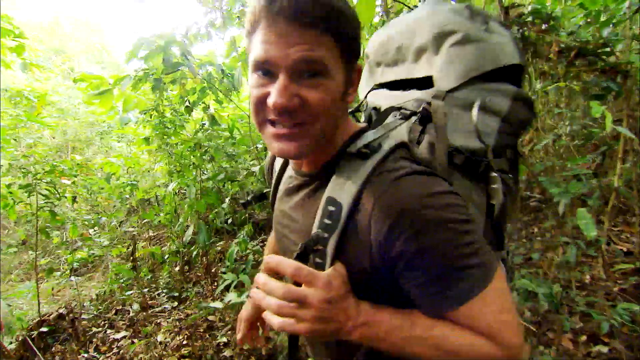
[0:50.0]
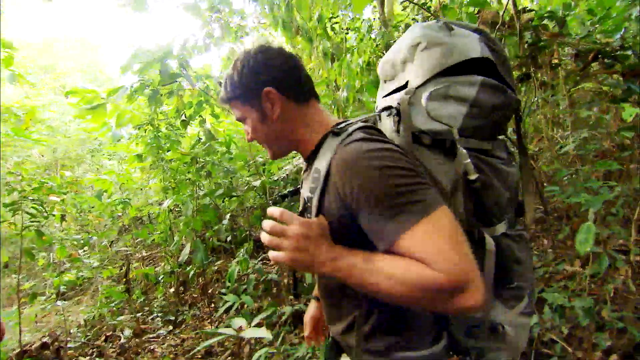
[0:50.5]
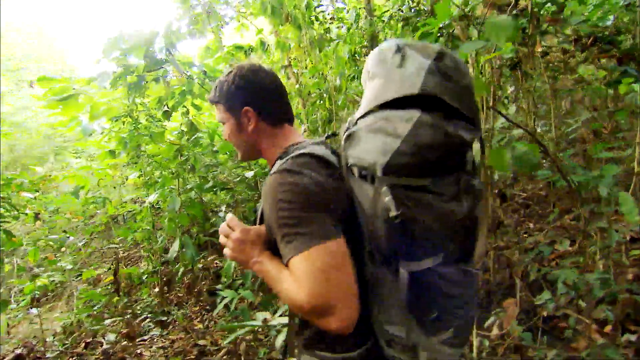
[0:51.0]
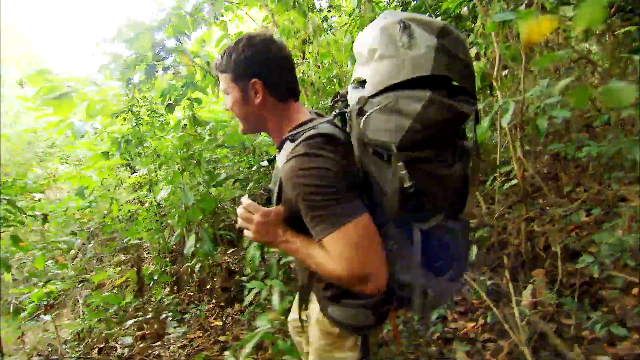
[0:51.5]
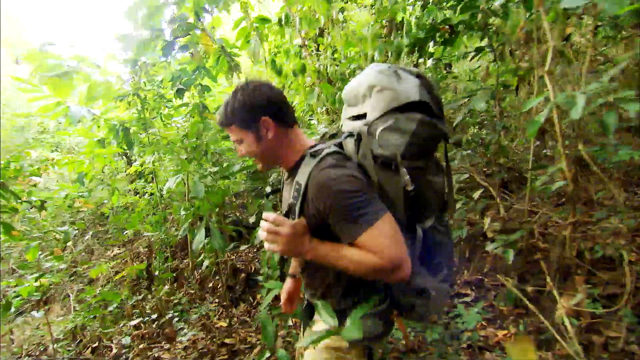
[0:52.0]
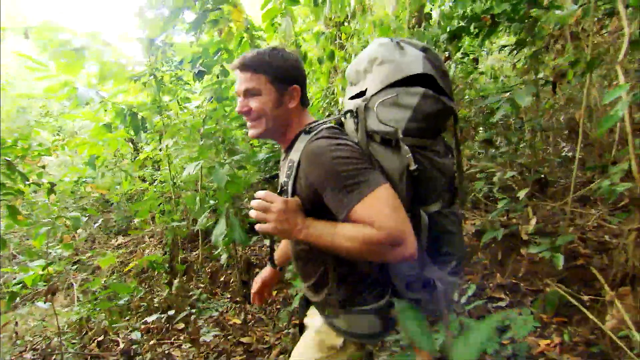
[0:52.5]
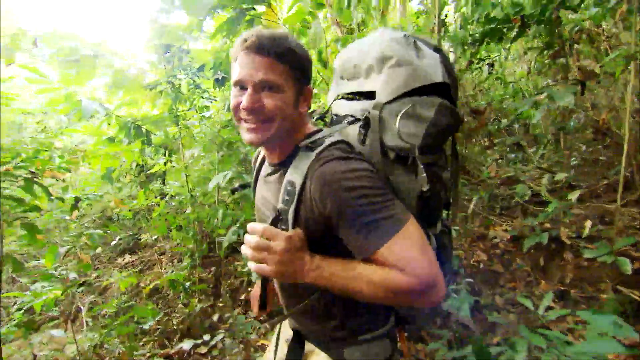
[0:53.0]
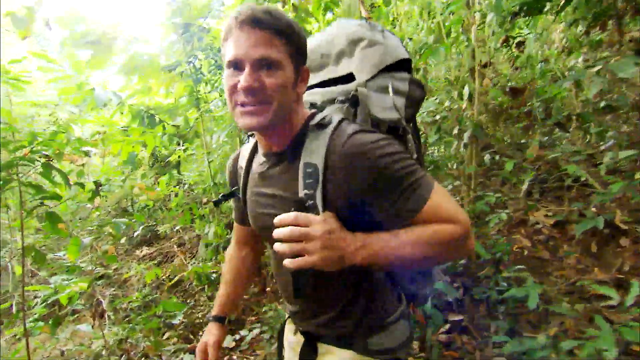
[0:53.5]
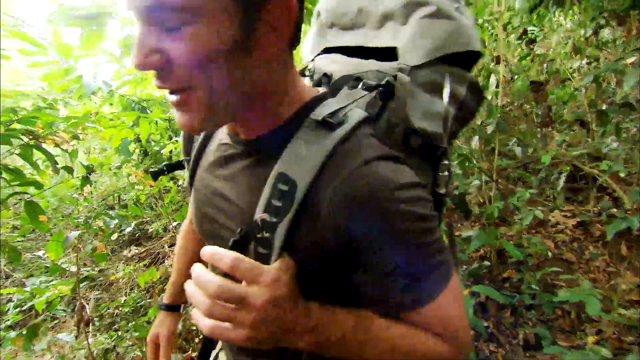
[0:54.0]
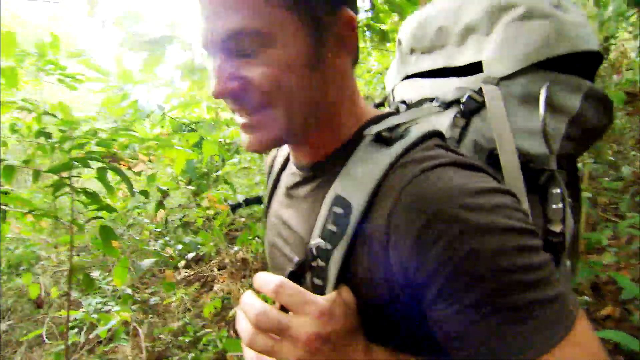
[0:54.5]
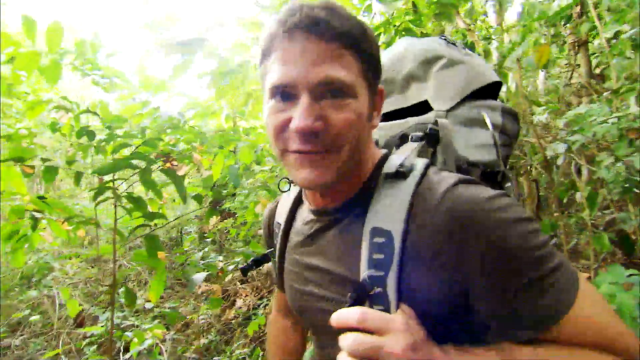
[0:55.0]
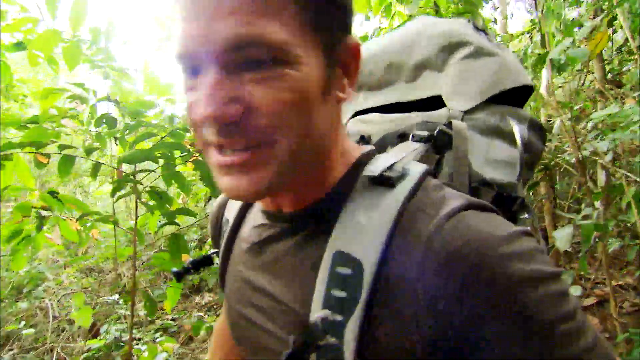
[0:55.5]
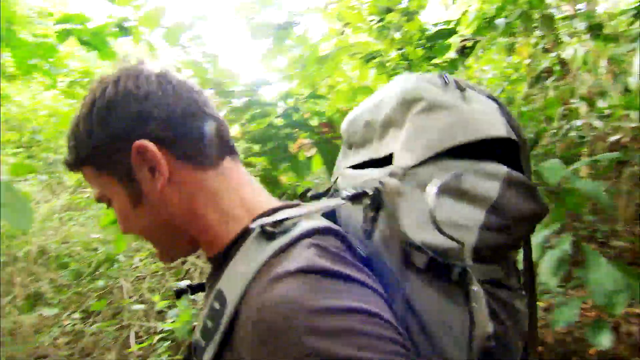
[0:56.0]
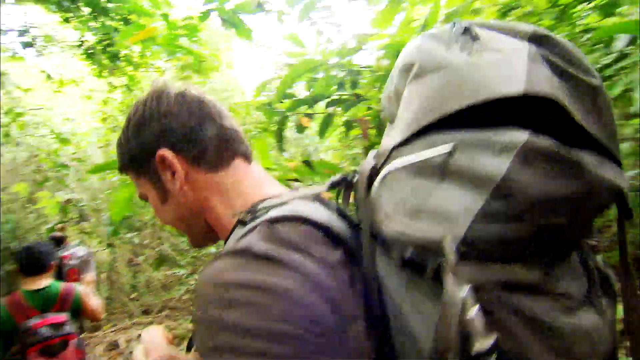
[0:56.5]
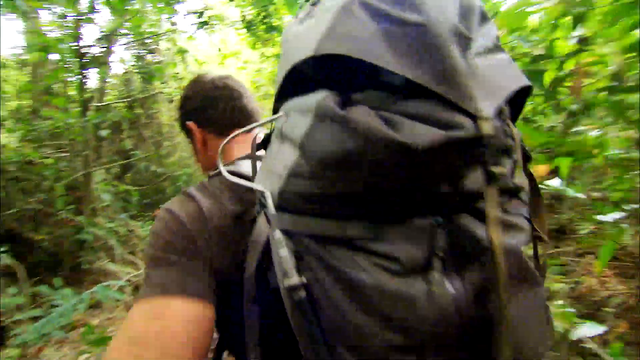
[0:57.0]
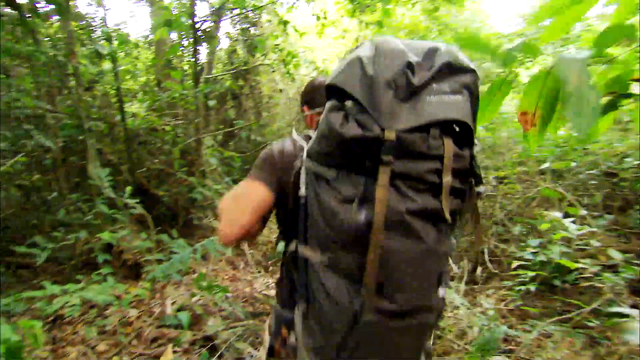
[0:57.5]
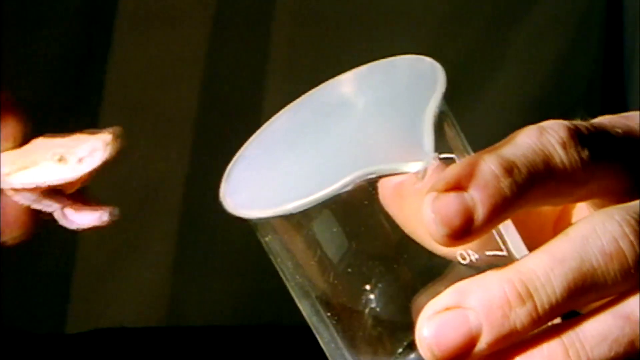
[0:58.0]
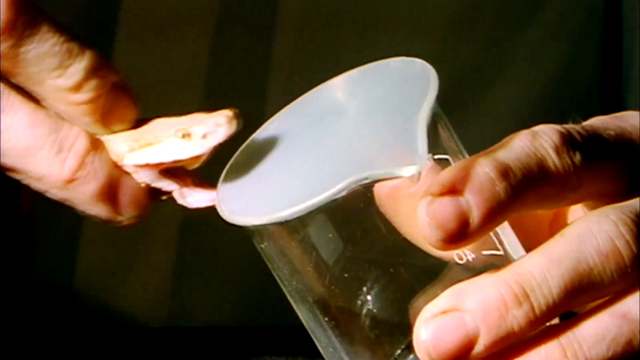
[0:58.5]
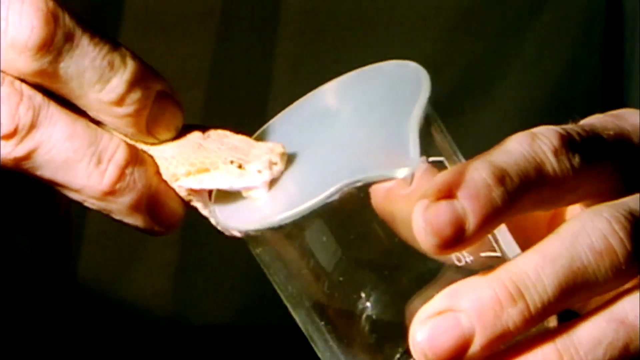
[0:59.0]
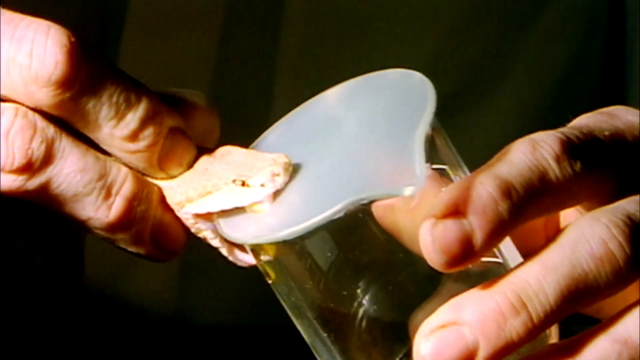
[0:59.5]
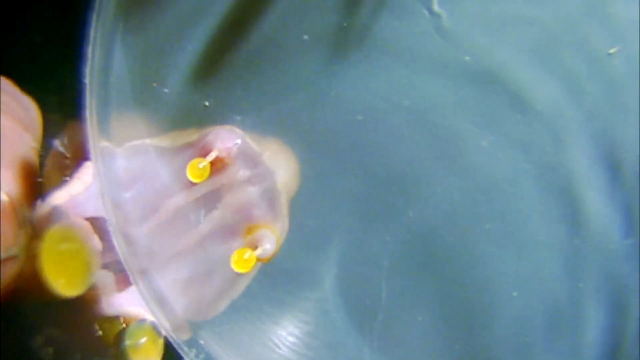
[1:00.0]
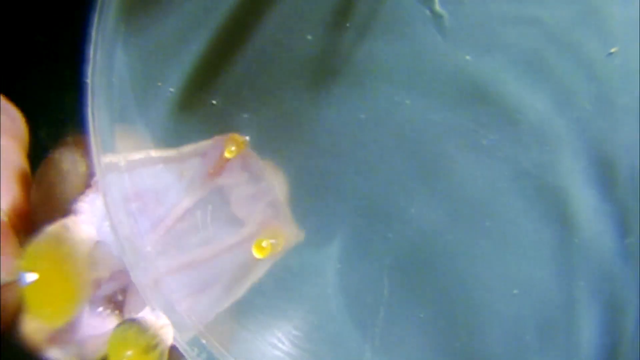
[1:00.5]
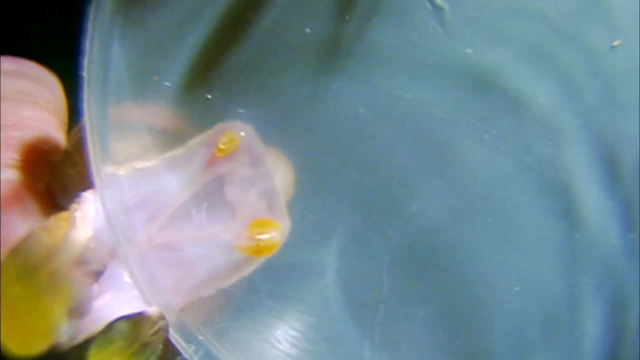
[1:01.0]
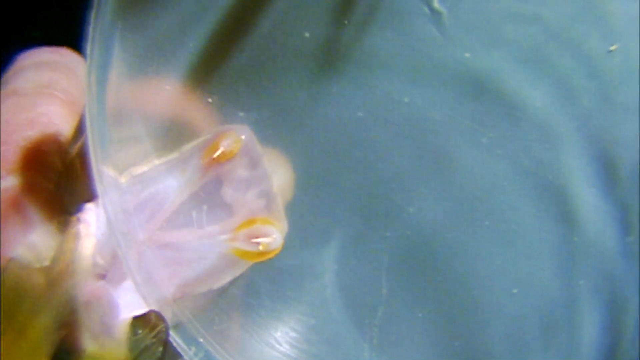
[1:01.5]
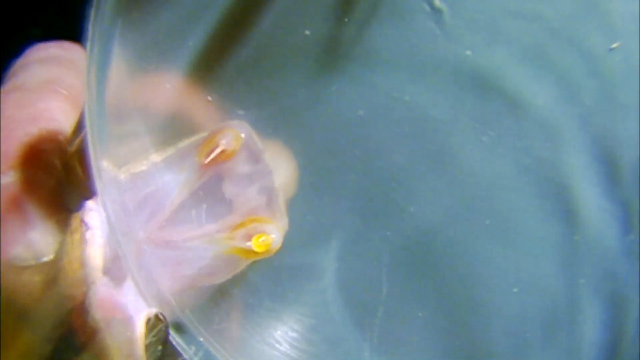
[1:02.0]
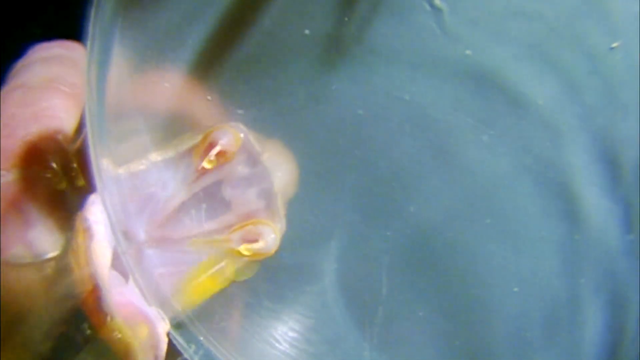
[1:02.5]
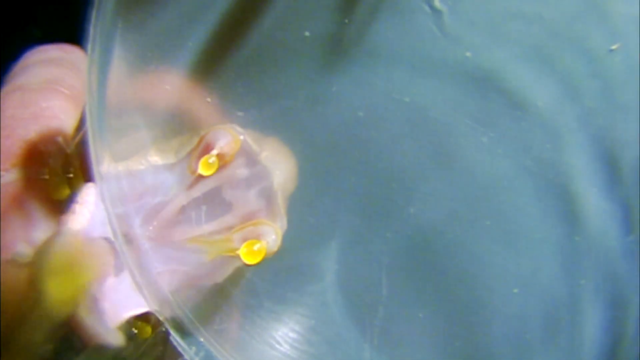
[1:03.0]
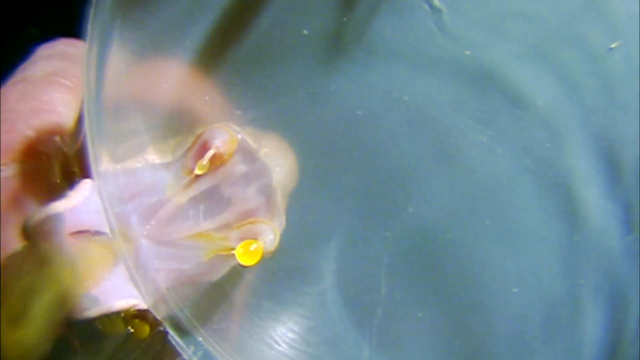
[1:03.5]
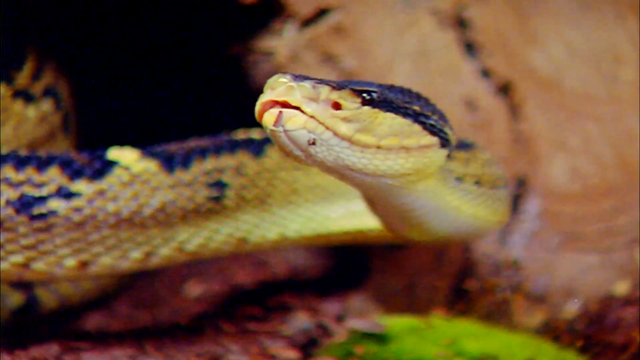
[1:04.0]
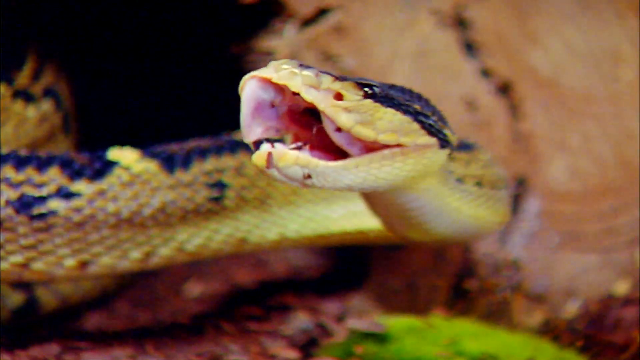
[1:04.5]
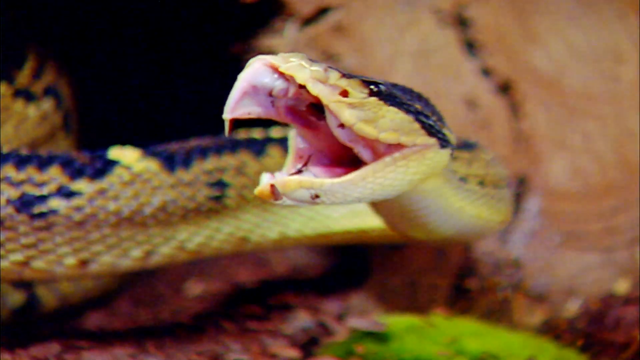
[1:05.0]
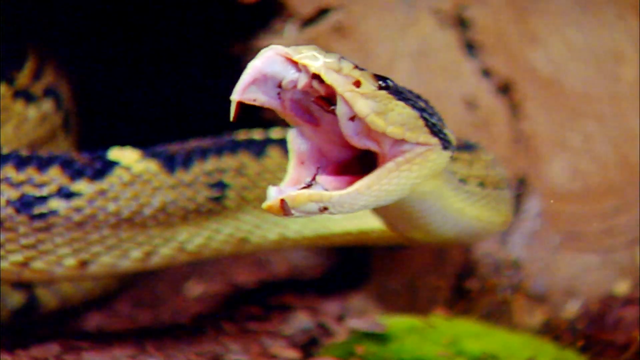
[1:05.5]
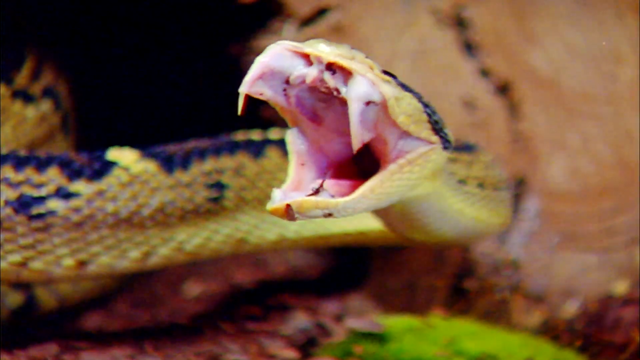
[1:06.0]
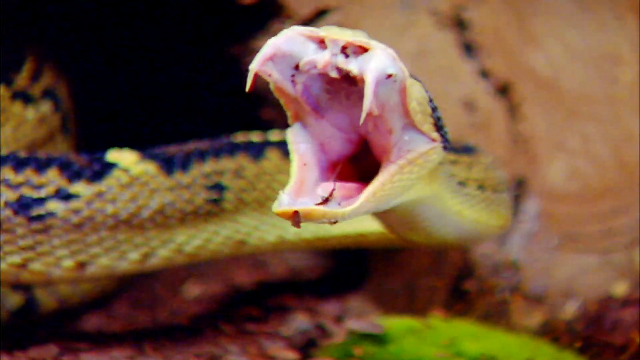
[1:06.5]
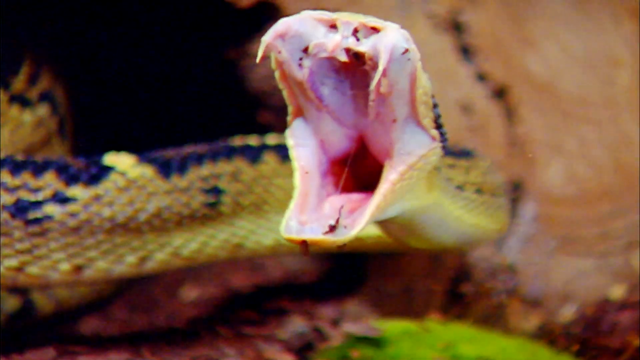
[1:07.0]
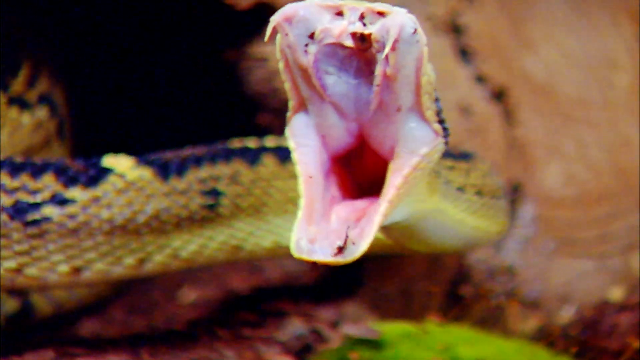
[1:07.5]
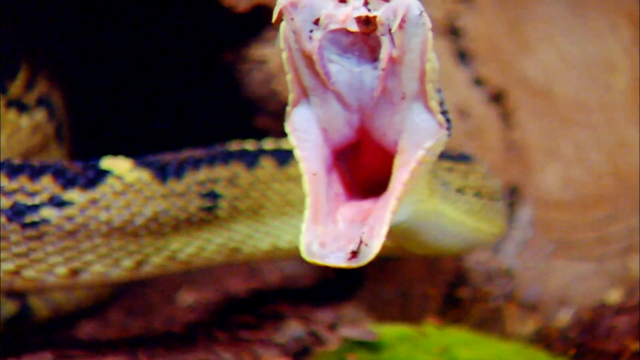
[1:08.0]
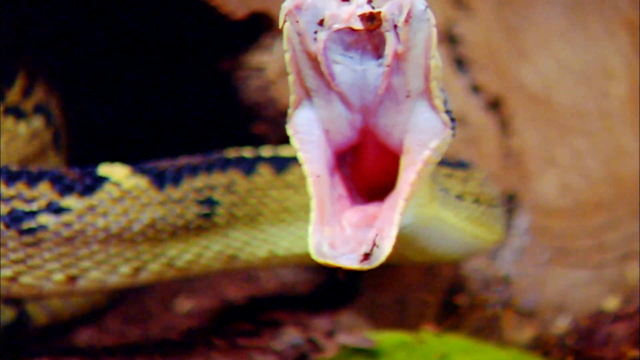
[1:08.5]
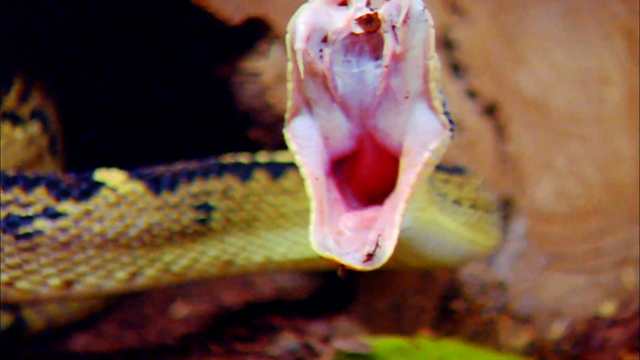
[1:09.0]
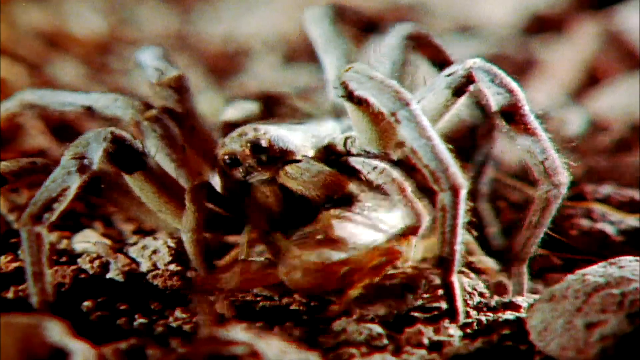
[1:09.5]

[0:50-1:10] The man turns away from the camera and continues to speak as he walks down, going straight for a few seconds and then turning toward the camera to say something. A shot shows him walking away from the camera with his large backpack. The video cuts to what looks like a snake coming from the left side toward a glass scientific beaker. The snake bites down on the lid of the beaker, and venom, which looks yellow, goes into the beaker, seen from the side. A shot from the bottom of the beaker looking up shows the yellow venom falling into the container. A close-up shows a yellow snake looking toward the left side of the frame, opening its mouth so its teeth, throat and whole mouth are visible. The video then cuts to what looks like a giant tarantula that appears to be eating something.